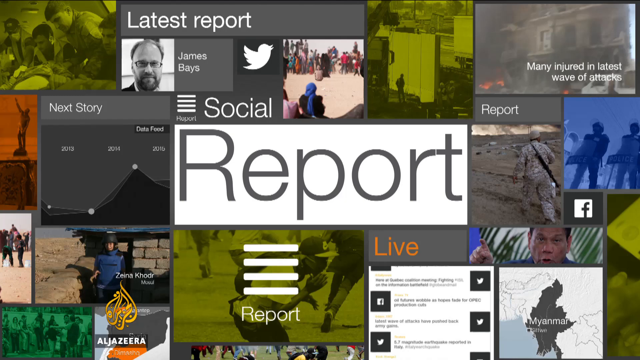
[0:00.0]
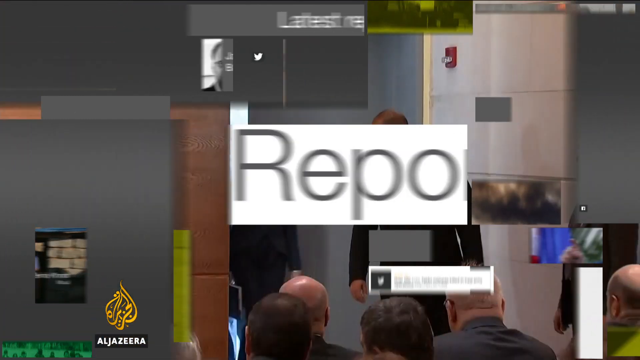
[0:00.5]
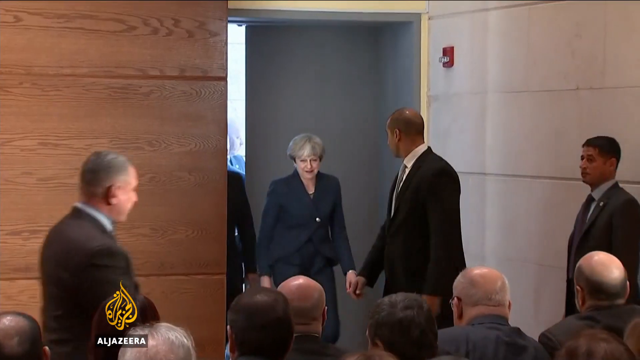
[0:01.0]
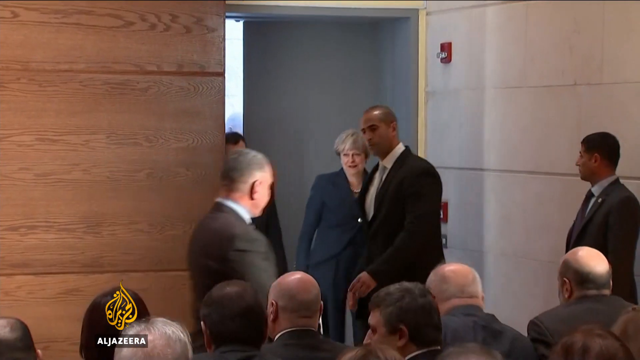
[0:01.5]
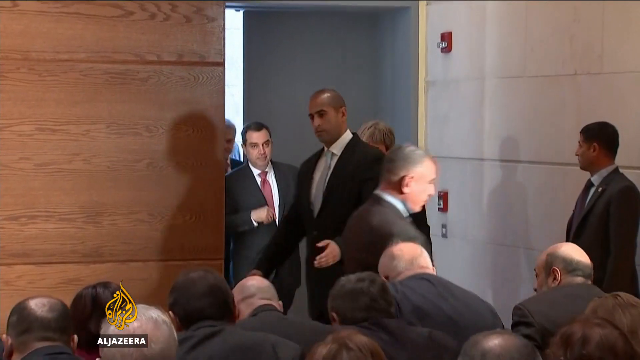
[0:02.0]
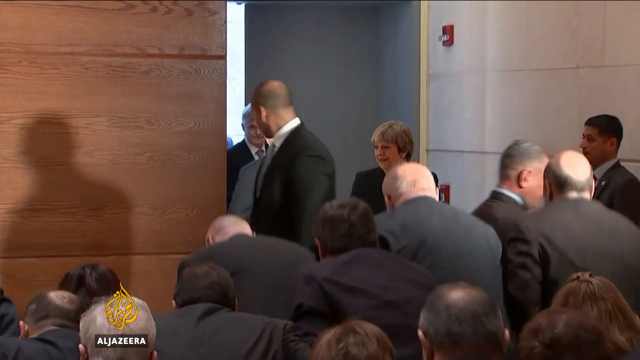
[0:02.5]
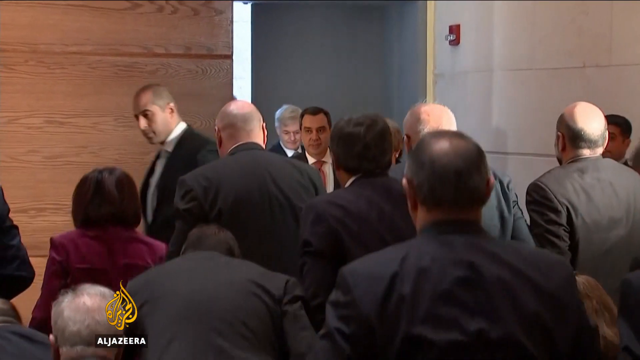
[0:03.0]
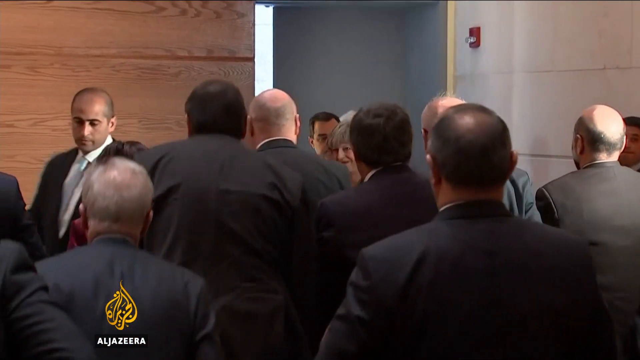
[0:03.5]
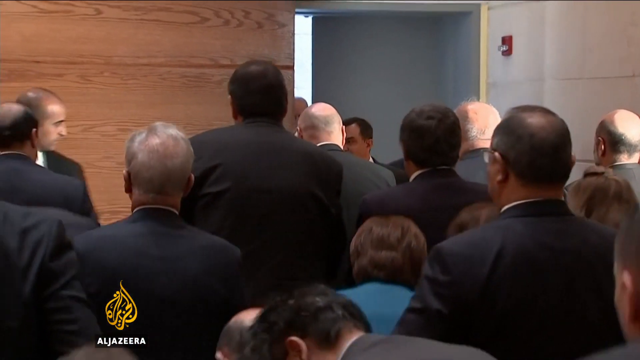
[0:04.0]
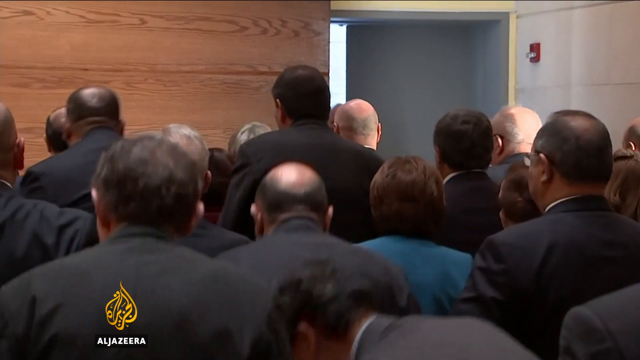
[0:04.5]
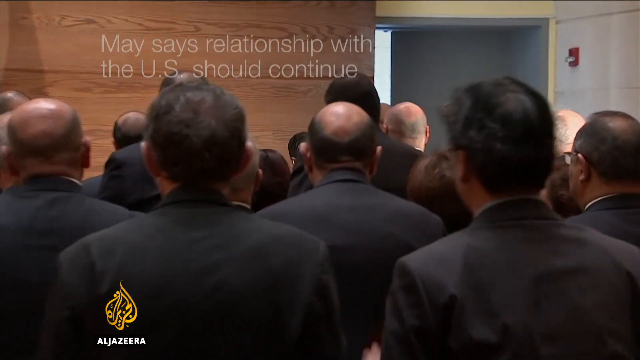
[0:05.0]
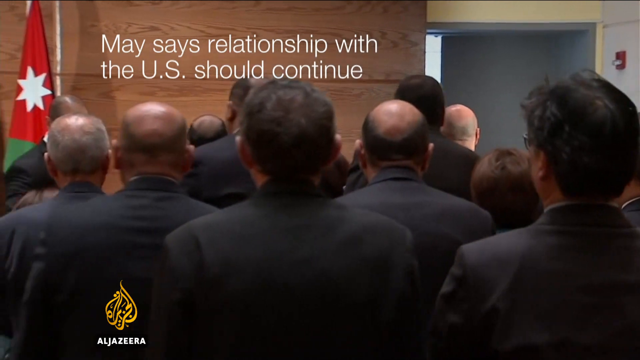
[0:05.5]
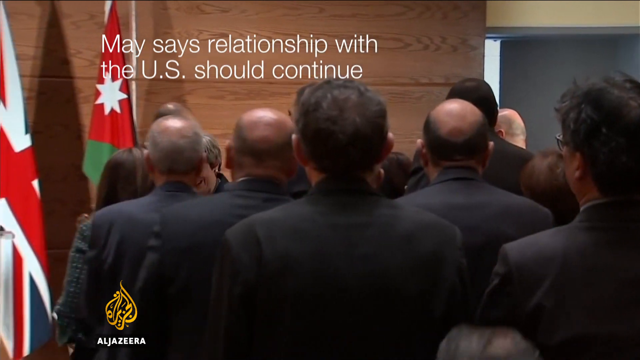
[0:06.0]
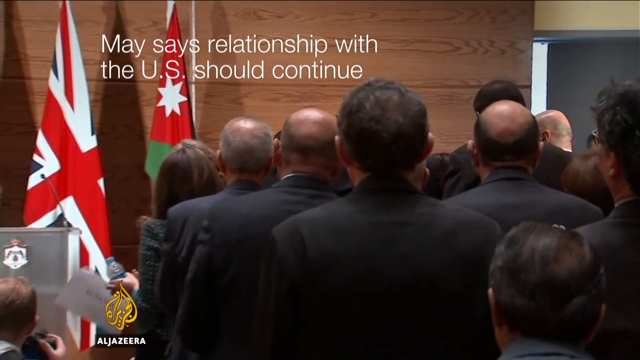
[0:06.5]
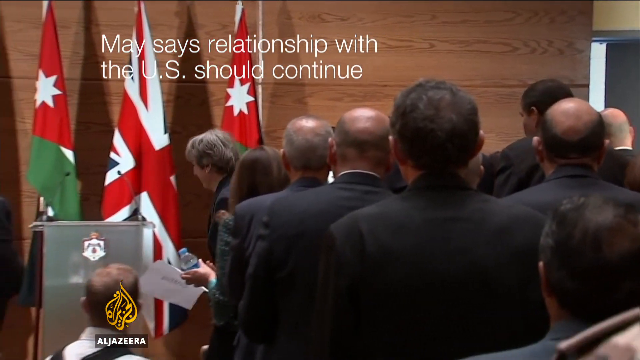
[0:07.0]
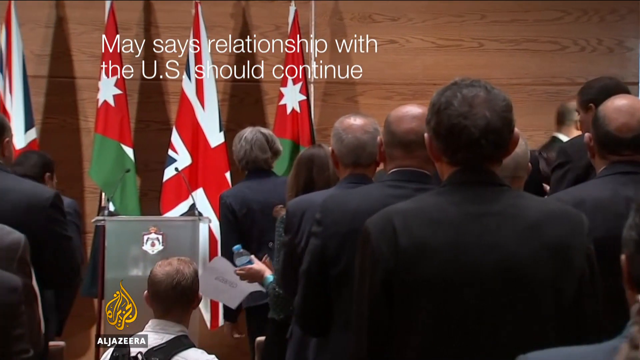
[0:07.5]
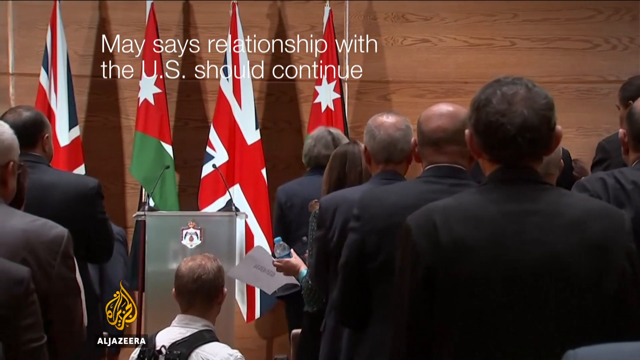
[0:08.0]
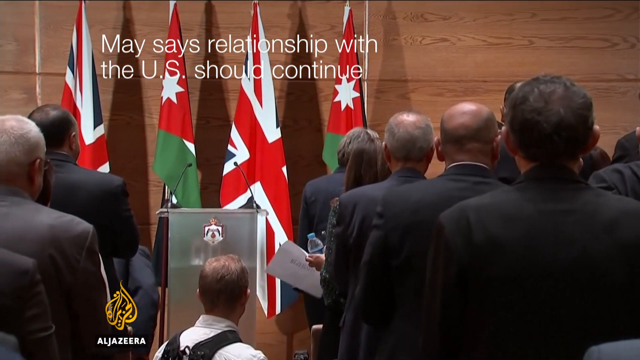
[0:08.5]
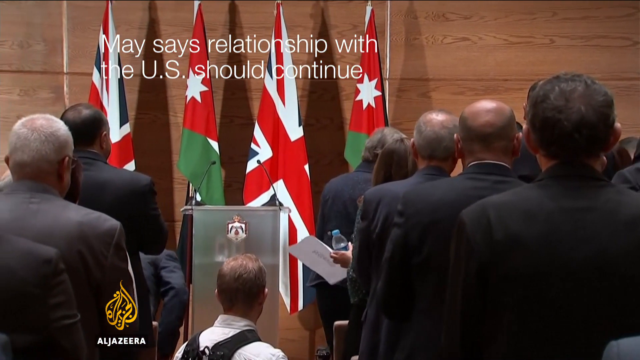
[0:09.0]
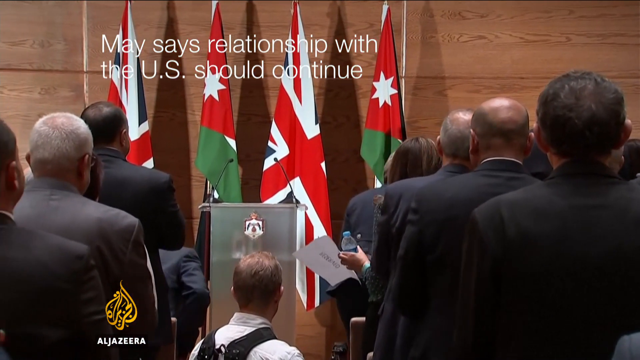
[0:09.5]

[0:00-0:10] This is a segment called Social Report Live from Al Jazeera News. It opens on a collage of different images with different colored filters over them: some green, orange, blue, and gray. Toward the top left is a gray rectangle that says "Latest Report" in white font. Directly below it are a small image and the name James Bayes, with a Twitter logo to the right. In the center of the screen, "Report." appears in large grey letters on a white background, and at the bottom right of it a smaller grey rectangle says "LIVE" in orange letters. The video then transitions to an auditorium. The camera is positioned toward the back of the room and zooms in on a doorway on the right side of the room. A couple of men dressed in suits walk out of the doorway, followed by Theresa May.